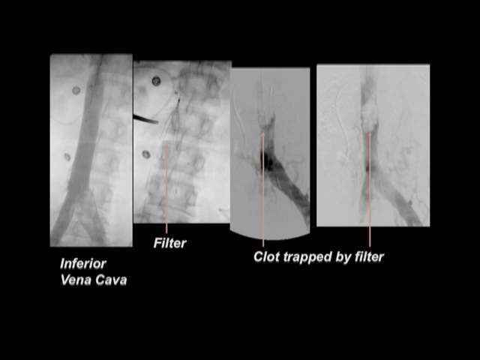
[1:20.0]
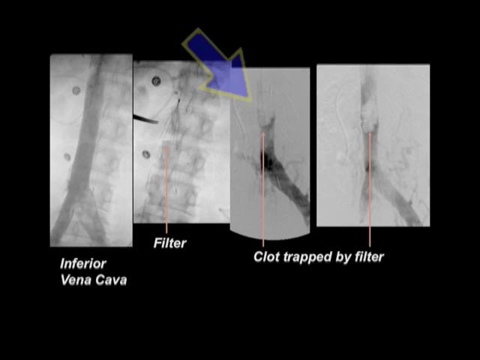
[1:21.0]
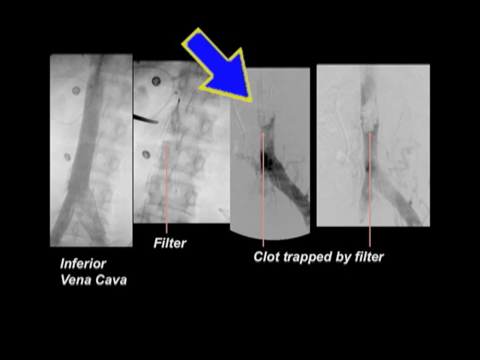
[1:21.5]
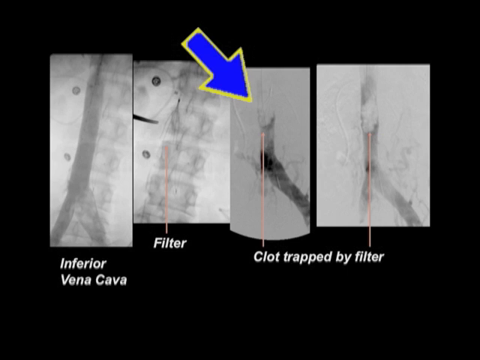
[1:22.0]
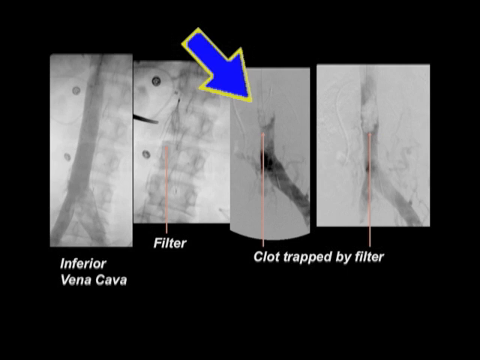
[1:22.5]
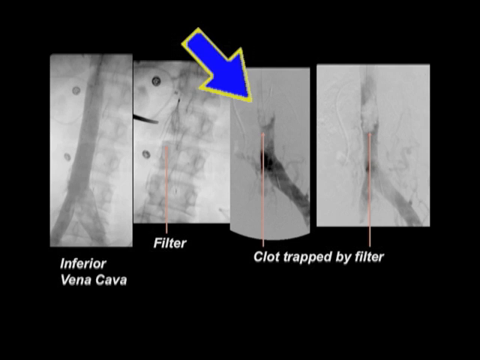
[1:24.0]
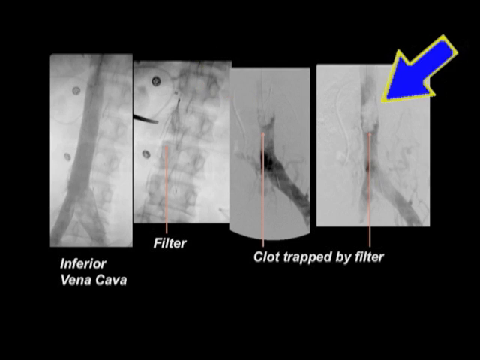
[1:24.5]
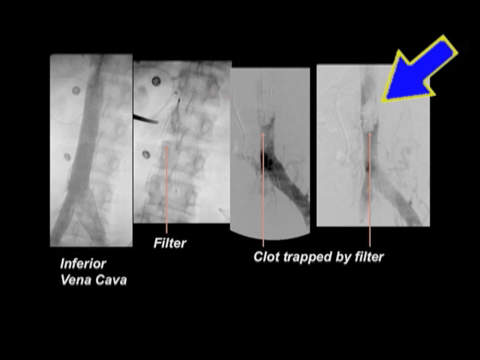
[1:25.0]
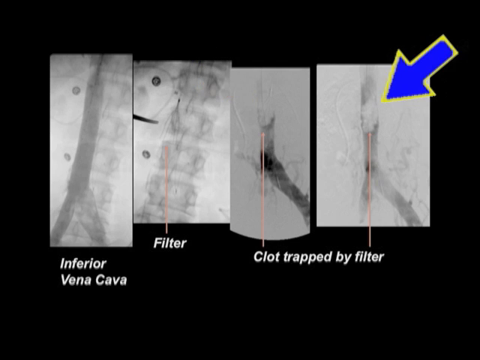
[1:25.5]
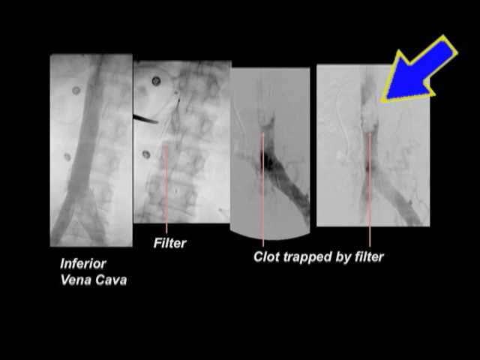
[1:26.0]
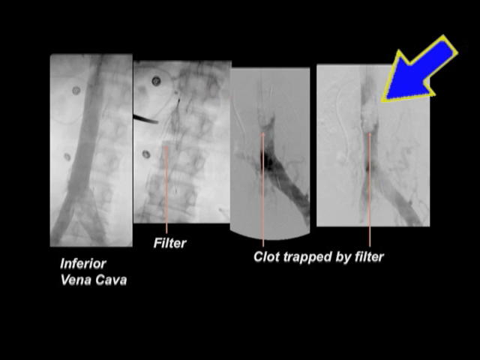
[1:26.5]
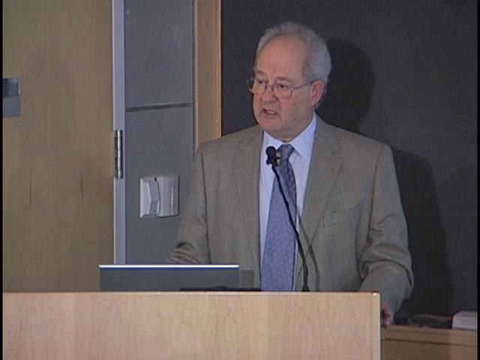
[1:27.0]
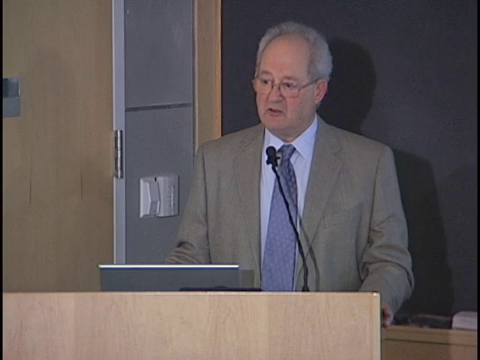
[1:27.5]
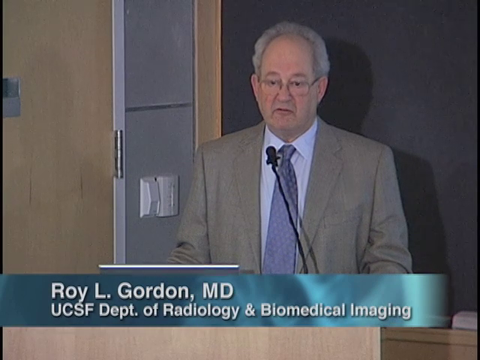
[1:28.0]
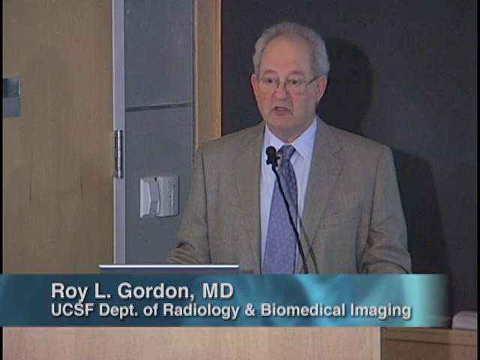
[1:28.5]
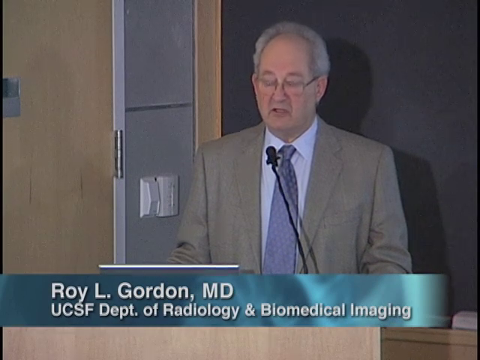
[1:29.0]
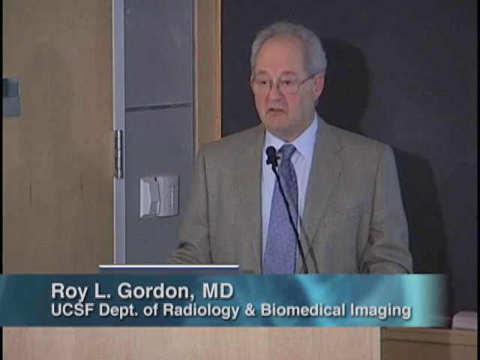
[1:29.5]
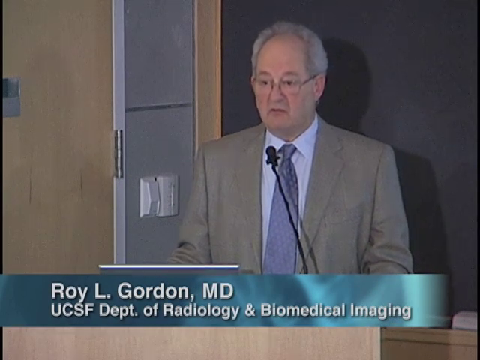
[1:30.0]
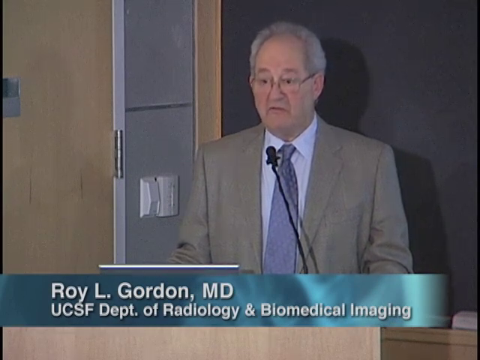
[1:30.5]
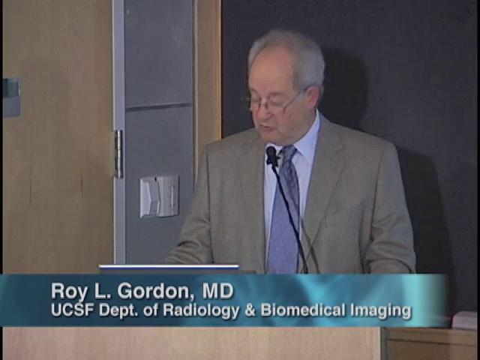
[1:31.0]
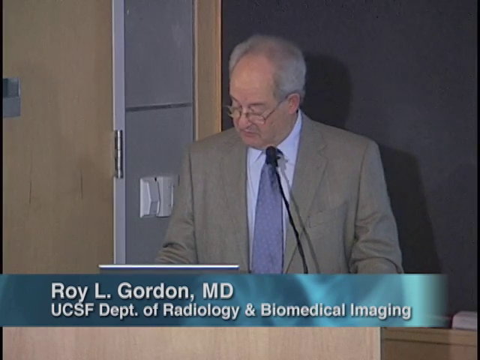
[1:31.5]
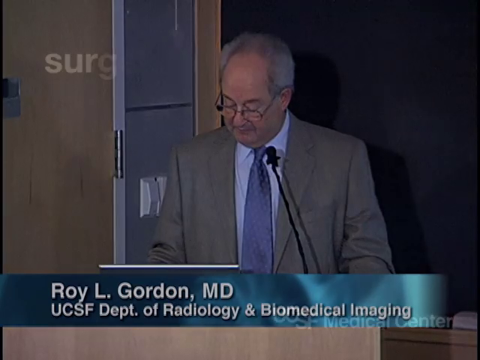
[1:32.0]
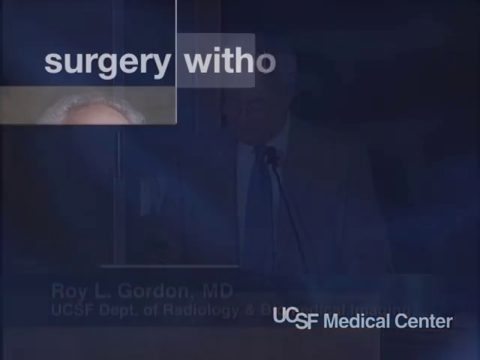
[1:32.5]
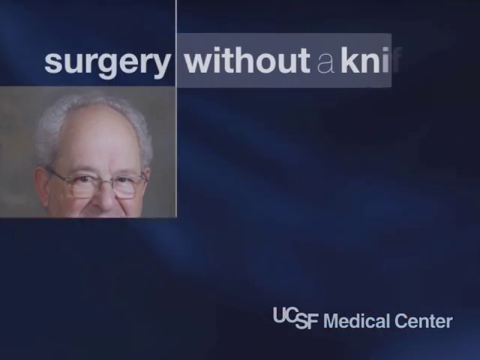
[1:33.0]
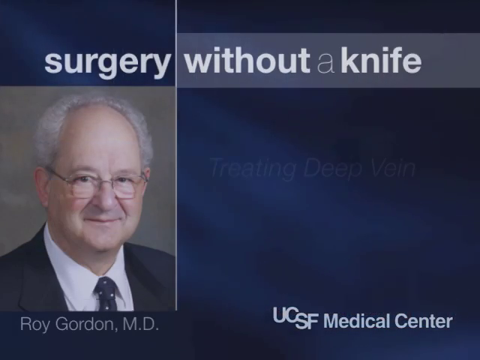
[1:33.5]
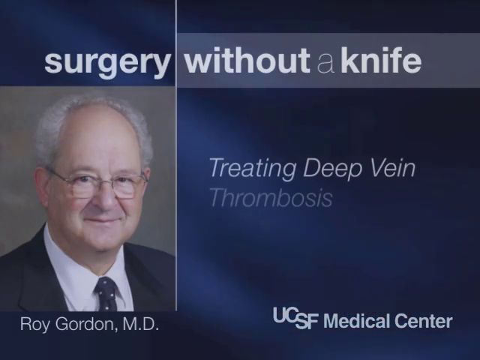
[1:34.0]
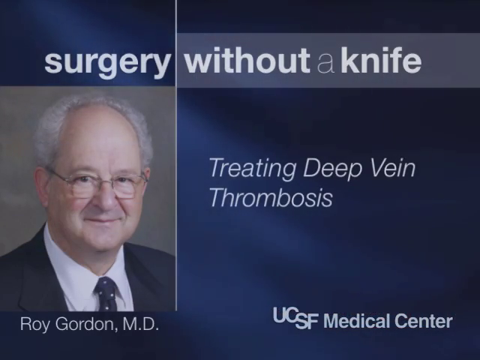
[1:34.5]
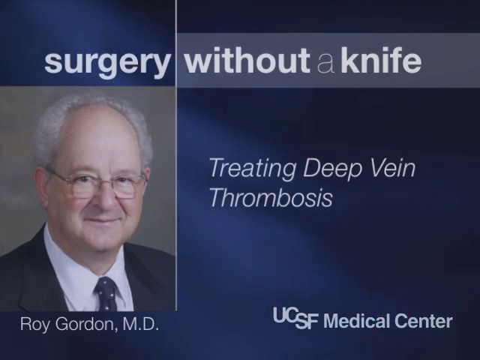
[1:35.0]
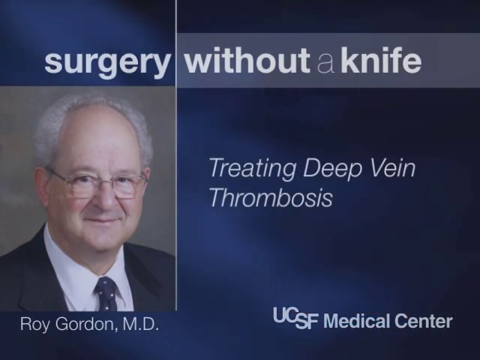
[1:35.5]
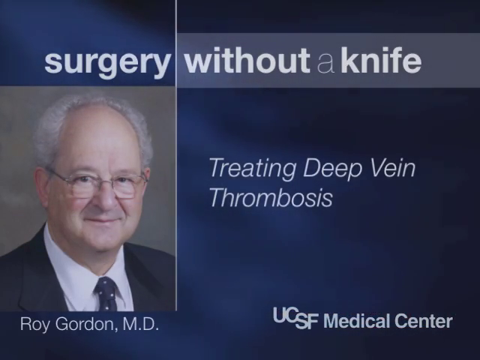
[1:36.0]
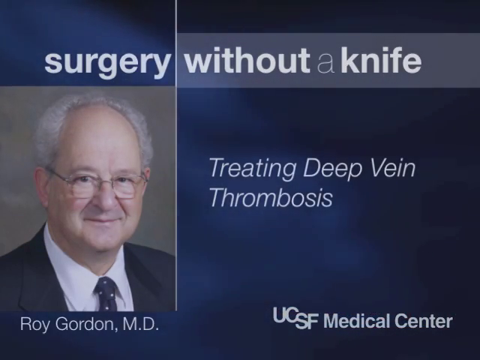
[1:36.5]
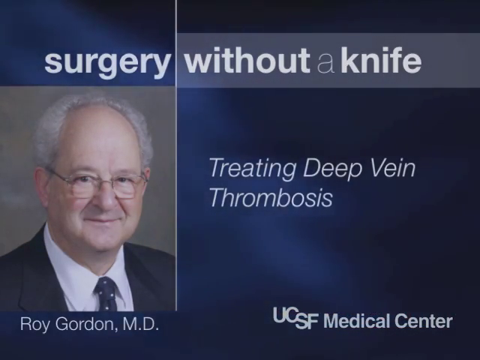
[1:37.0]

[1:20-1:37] A black background holds four labeled images: "inferior vena cava," "filter," and "clot trapped by filter." The text is white, and pink lines connect the text to the images. A blue arrow with a yellow outline points to the clot trapped by filter, and another blue arrow with a yellow outline is connected to another photo of the clot trapped by filter. The man with white hair, a very large forehead and glasses then speaks into a microphone at a podium with a screen in front of him. A blue banner pops up on the screen with white text that says "Roy L. Gordon, MD, UCSF, Department of Radiology and Biomedical Imaging." He talks and then looks down at his screen before the video transitions to a blue screen showing Roy Gordon, MD's photo with text that says "surgery without a knife, treating deep vein thrombosis, UCSF Medical Center."